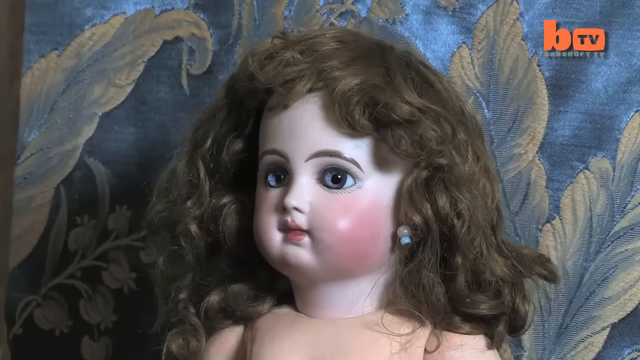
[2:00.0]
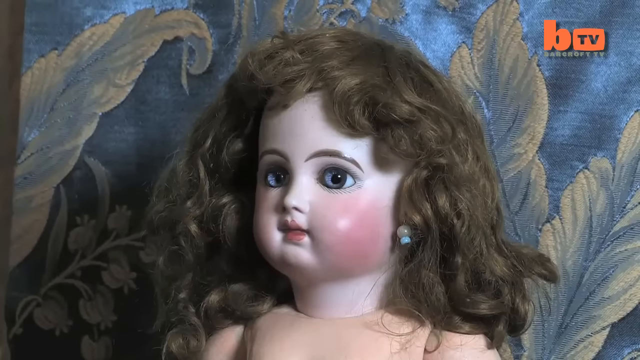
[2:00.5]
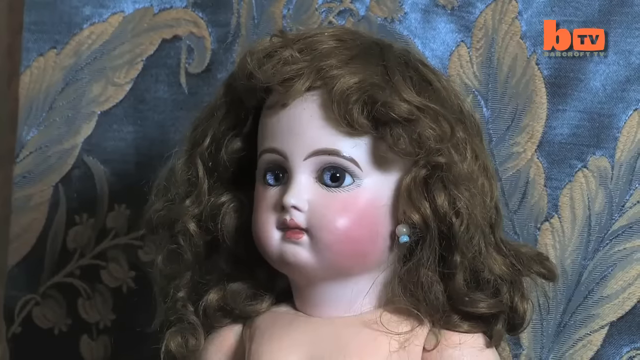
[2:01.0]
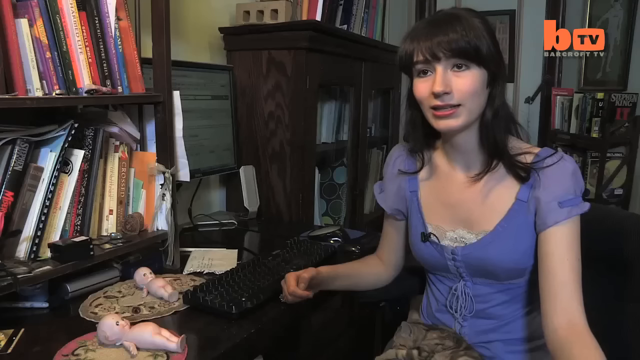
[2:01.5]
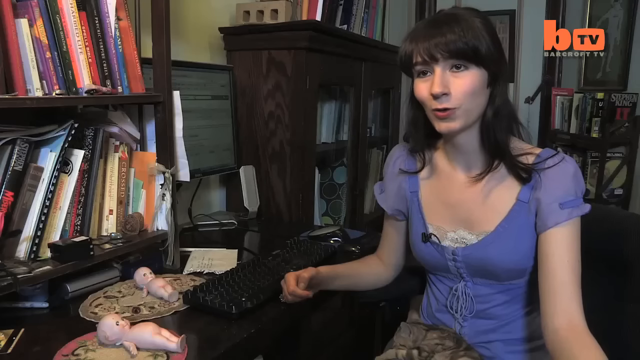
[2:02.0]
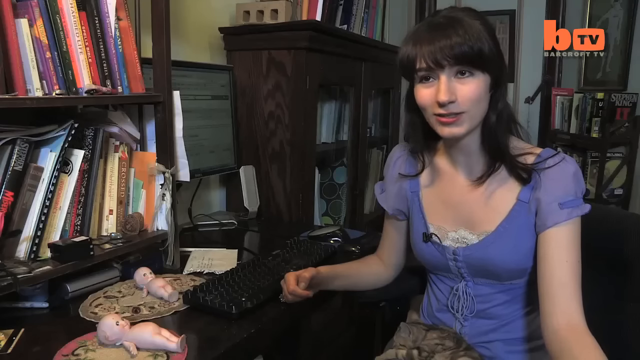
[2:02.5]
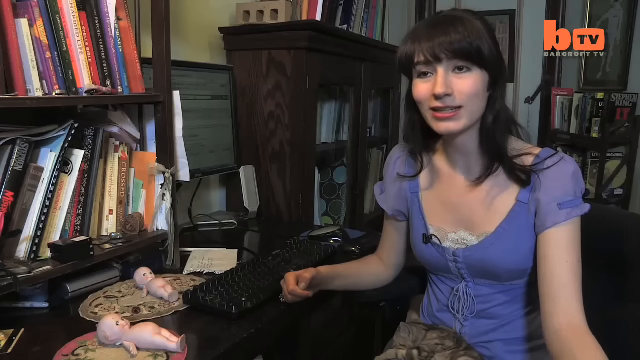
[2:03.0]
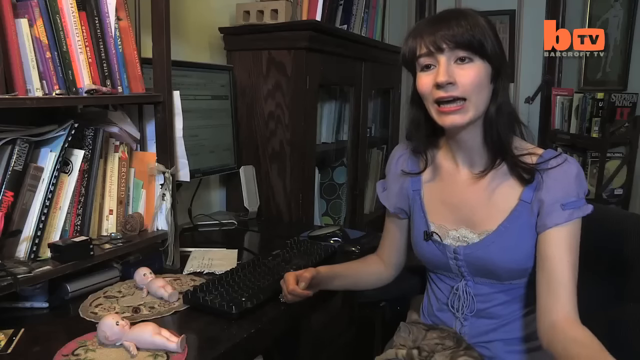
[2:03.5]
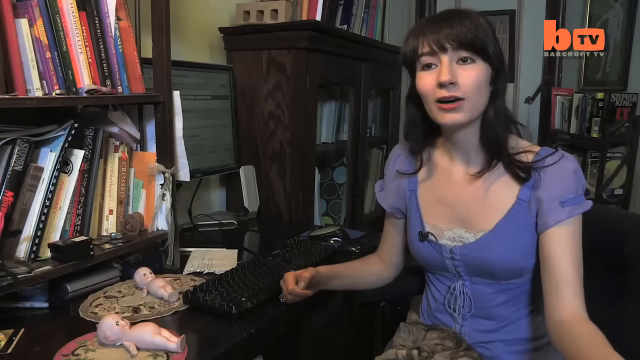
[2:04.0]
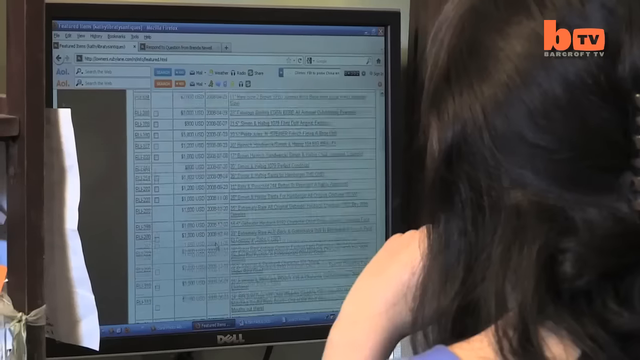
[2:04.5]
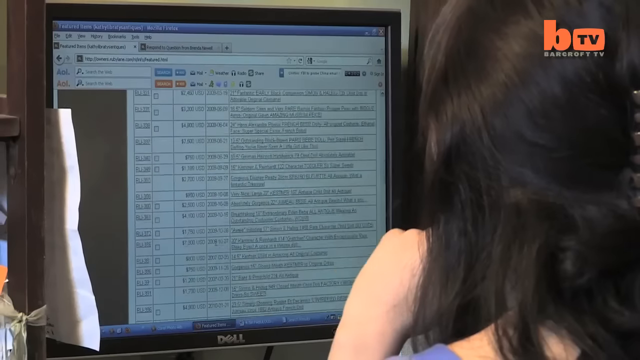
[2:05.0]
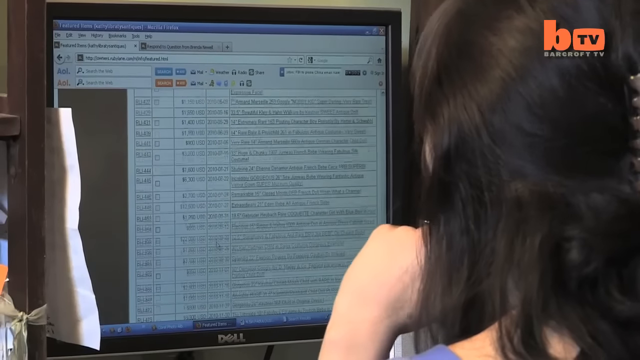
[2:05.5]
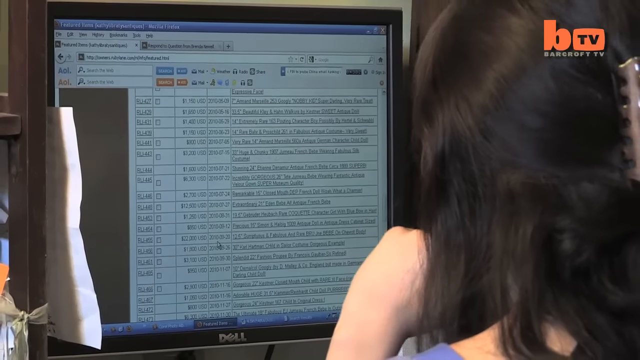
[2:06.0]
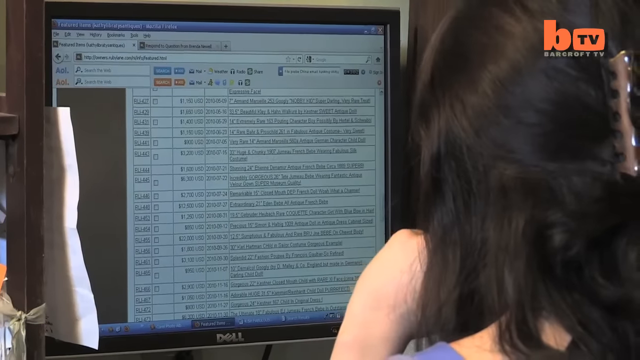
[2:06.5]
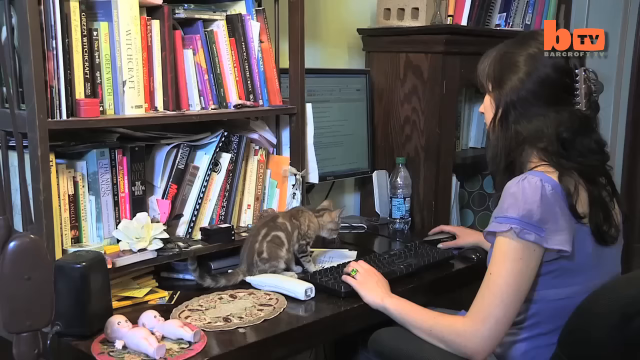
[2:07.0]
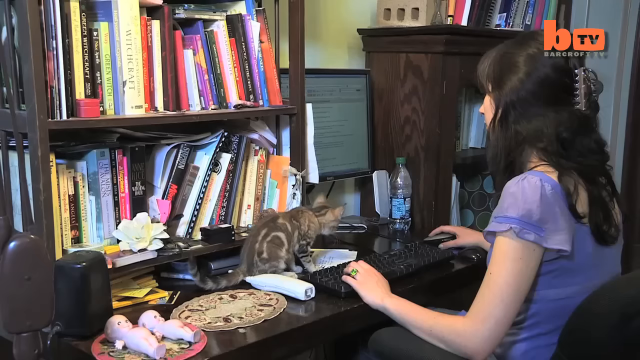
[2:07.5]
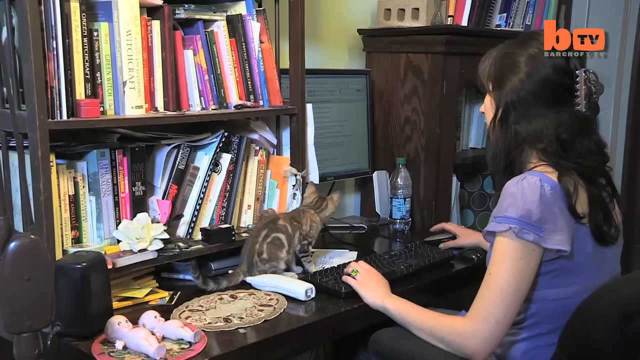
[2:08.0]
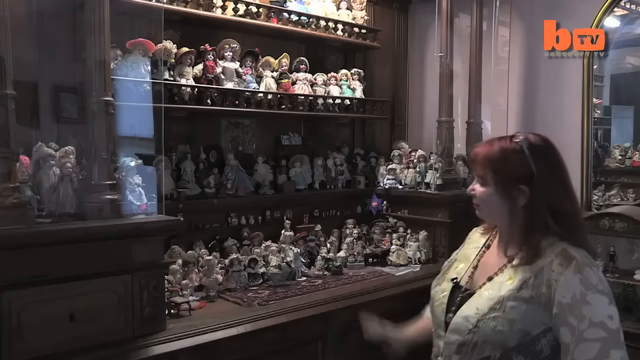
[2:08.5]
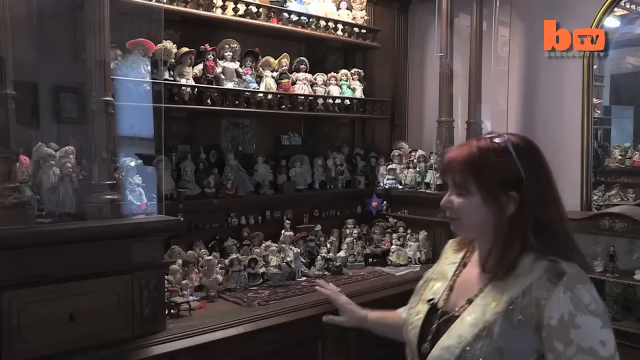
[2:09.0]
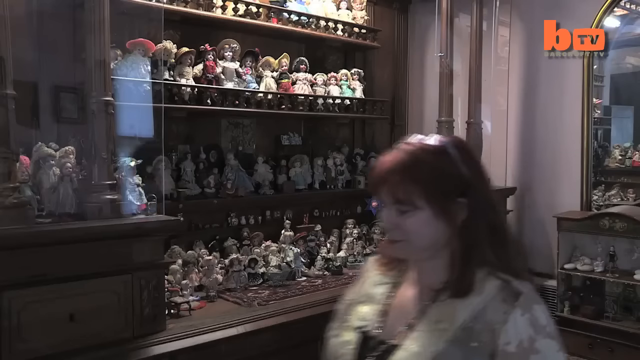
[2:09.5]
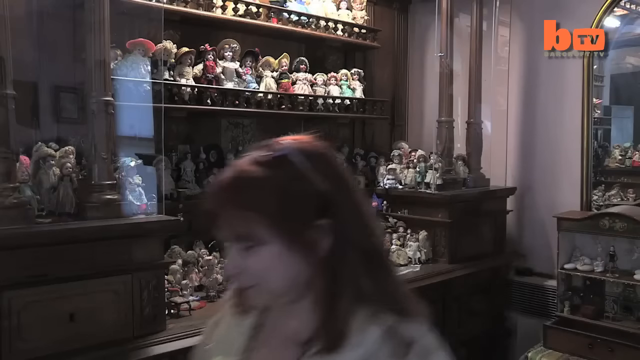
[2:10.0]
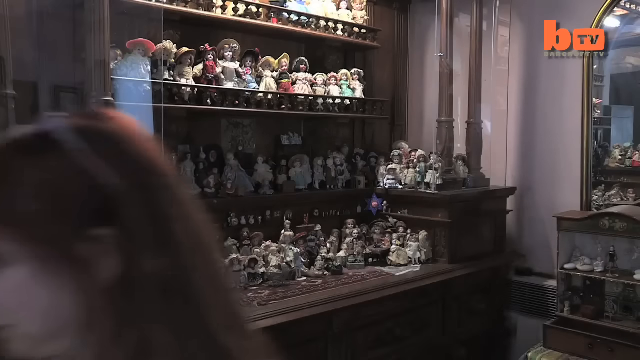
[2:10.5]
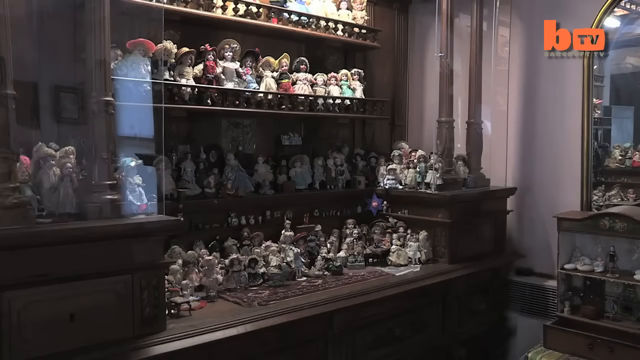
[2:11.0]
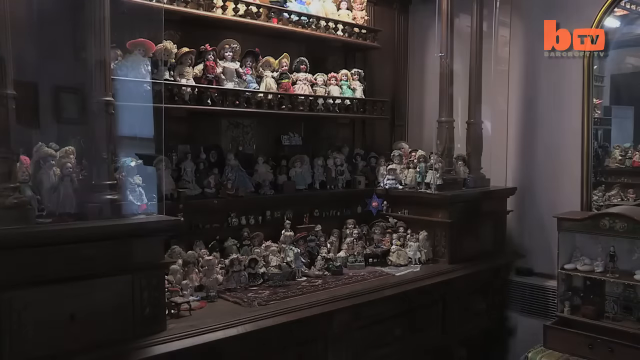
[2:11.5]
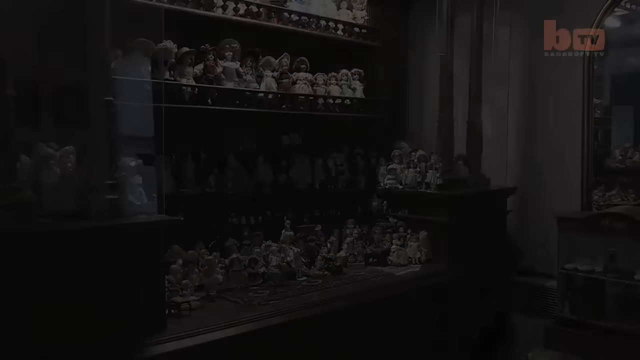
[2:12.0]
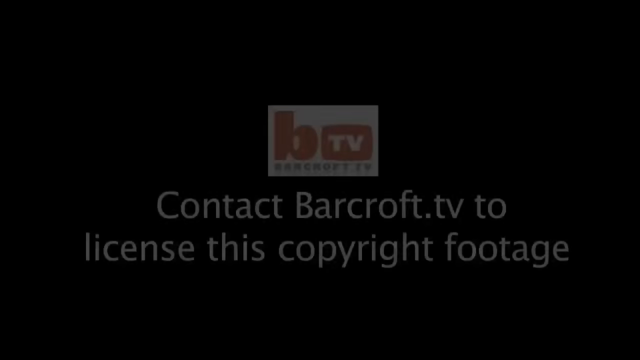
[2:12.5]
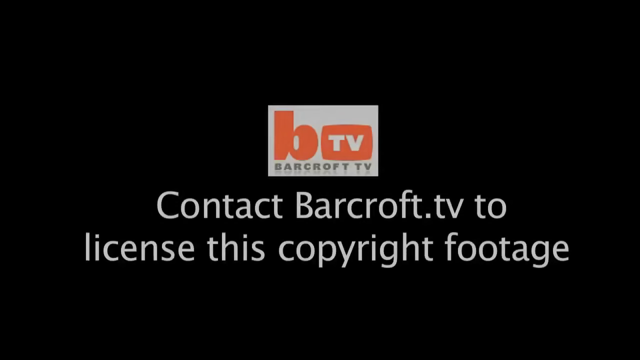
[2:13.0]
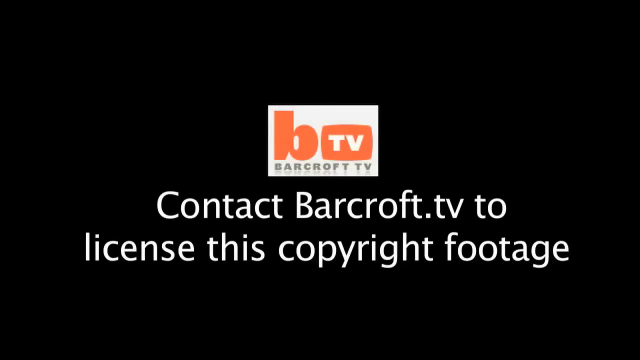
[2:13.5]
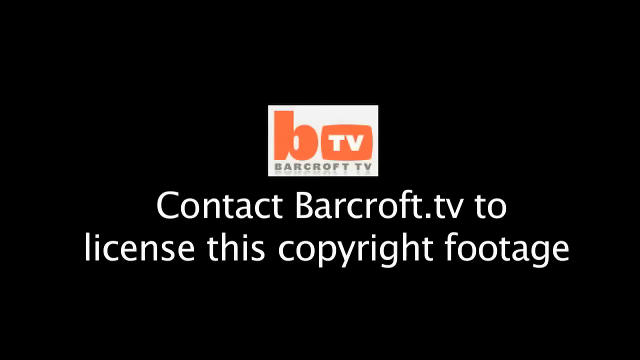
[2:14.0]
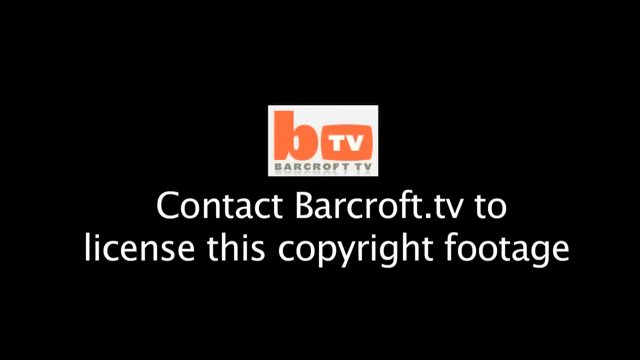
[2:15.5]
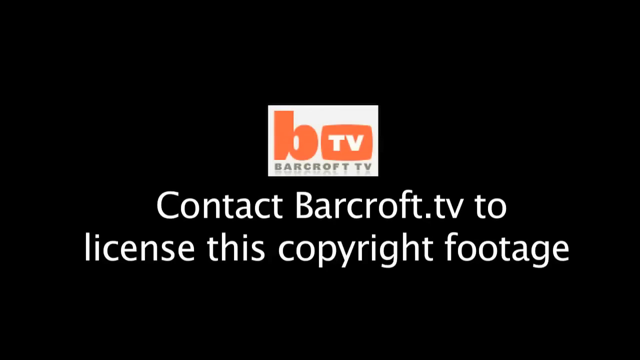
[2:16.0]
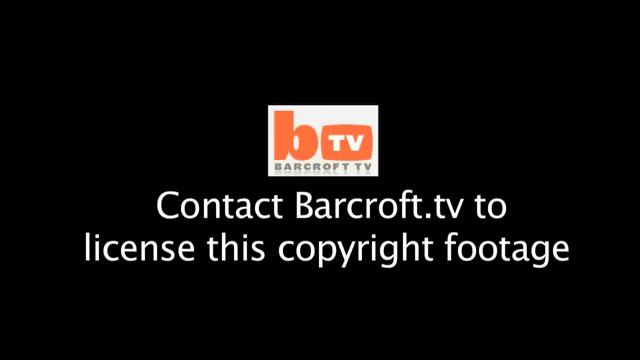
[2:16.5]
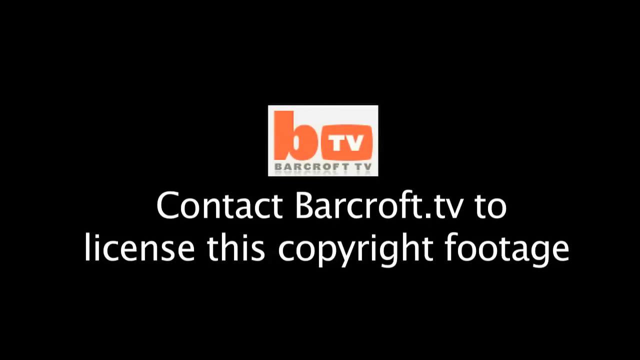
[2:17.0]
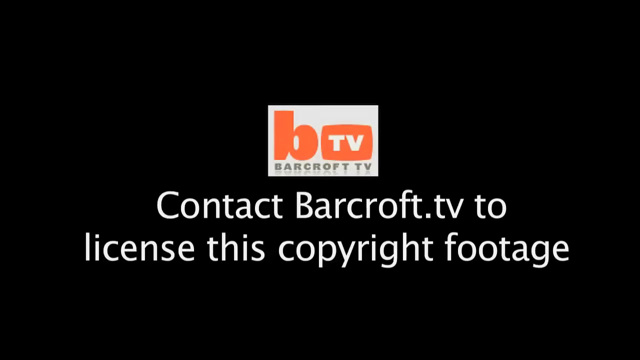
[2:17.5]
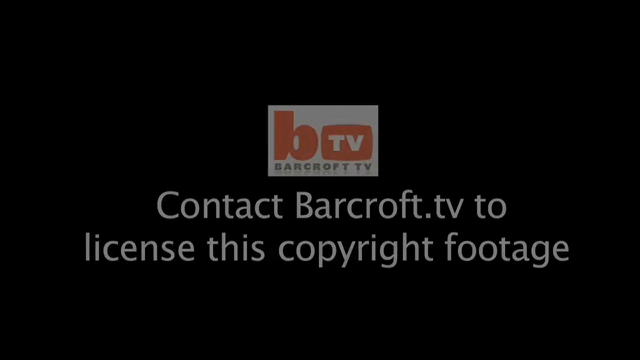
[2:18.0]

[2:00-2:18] A very quick shot shows a doll with brown hair and what looks like an earring on its right ear. The doll is shown from the front with its head turned to the right, in front of a background art design that is blue with leaf-like patterns and more of a tan color. Next, the daughter sits and talks into the camera, one arm resting on her black desk and the other off to the side. She then scrolls down a list of files on her computer, the screen showing many rows of horizontal text. A small brown cat is on the black desk, shown from a side view, accompanying the daughter. Then the owner of the doll collection walks by tons of small dolls shown on a very large dark brown platform, with two balcony-like shelves of dolls. The video ends with white text reading "contact Barcroft TV to license this copyright footage" beneath the logo: a white square with a lowercase orange "b", an orange square with "TV" in white text, and "Barcroft TV" below in gray text.